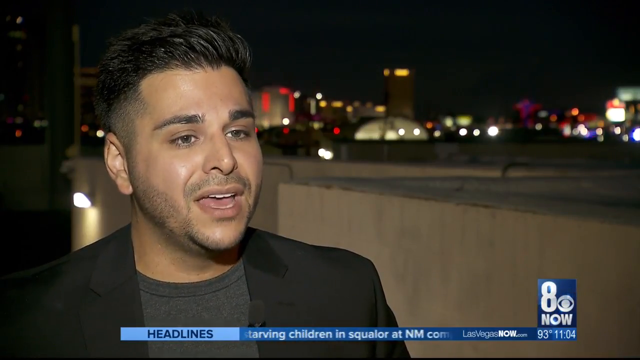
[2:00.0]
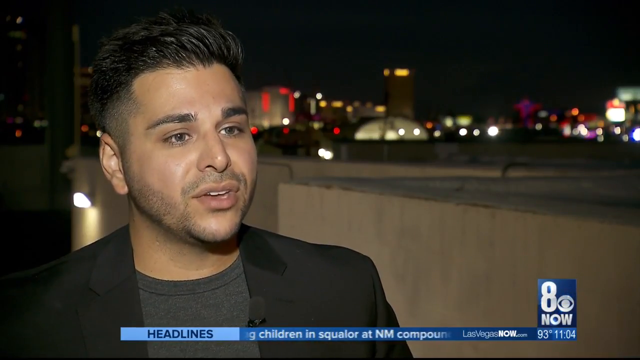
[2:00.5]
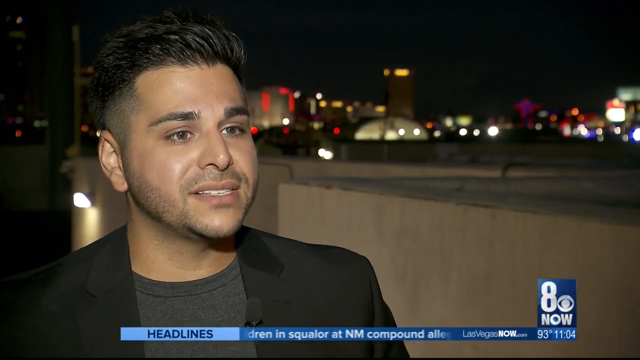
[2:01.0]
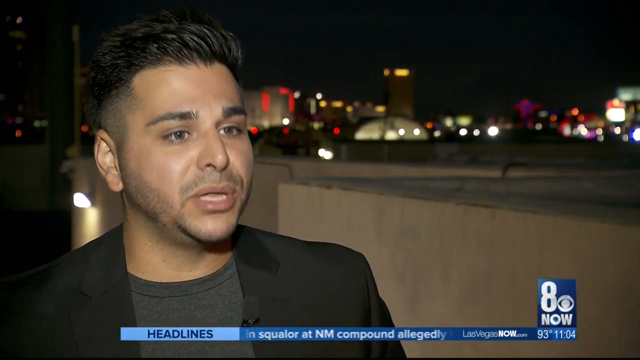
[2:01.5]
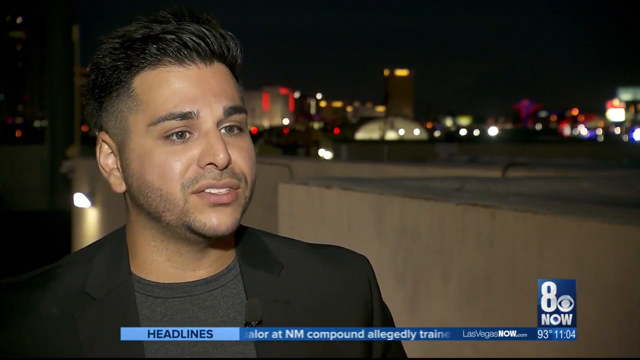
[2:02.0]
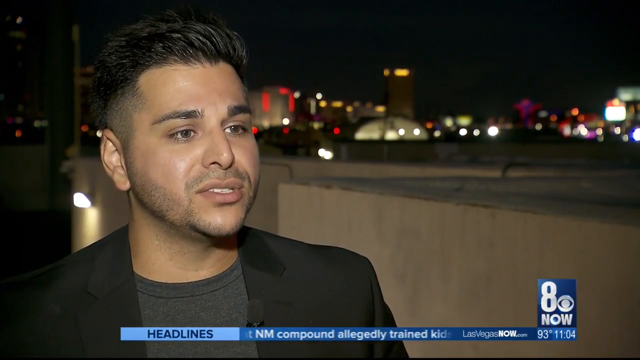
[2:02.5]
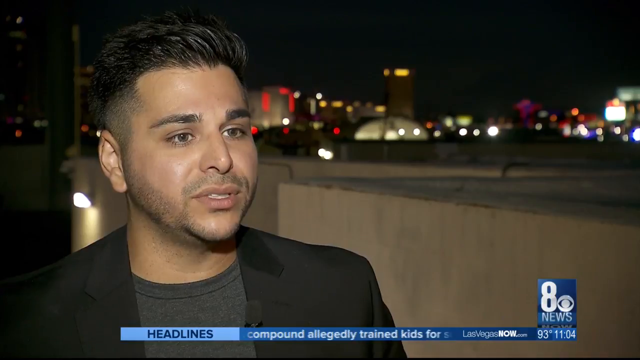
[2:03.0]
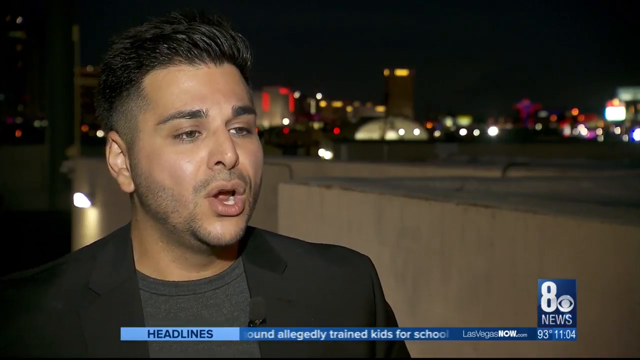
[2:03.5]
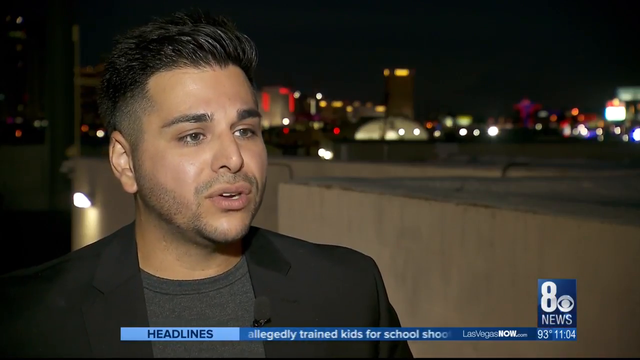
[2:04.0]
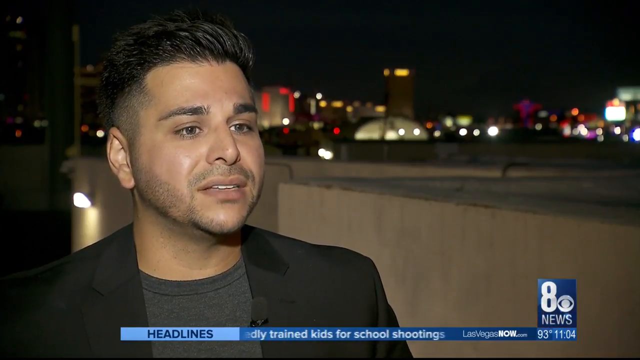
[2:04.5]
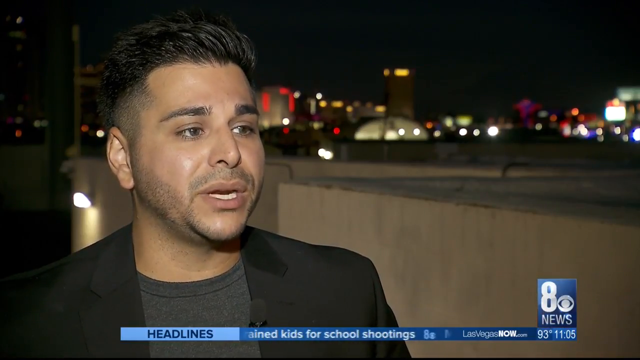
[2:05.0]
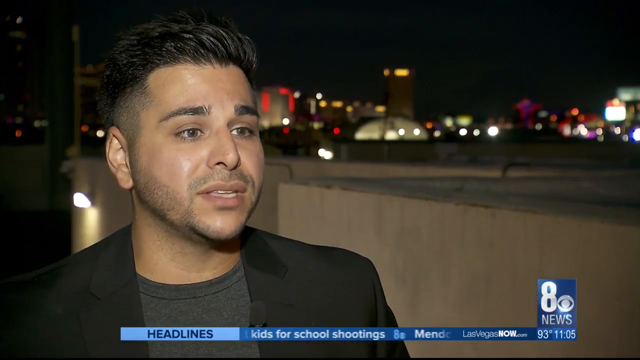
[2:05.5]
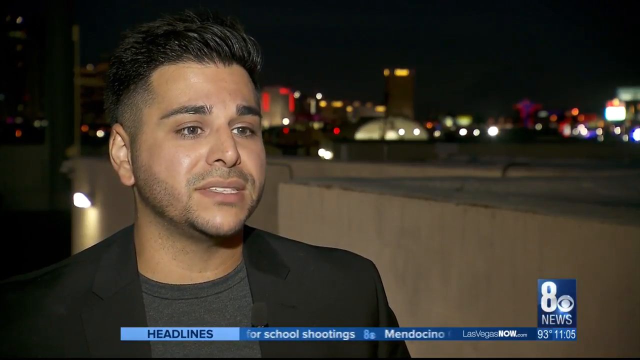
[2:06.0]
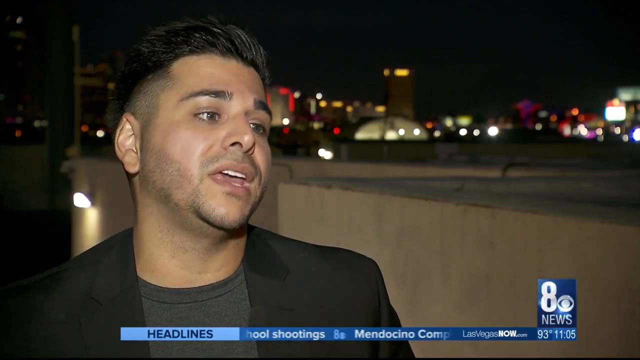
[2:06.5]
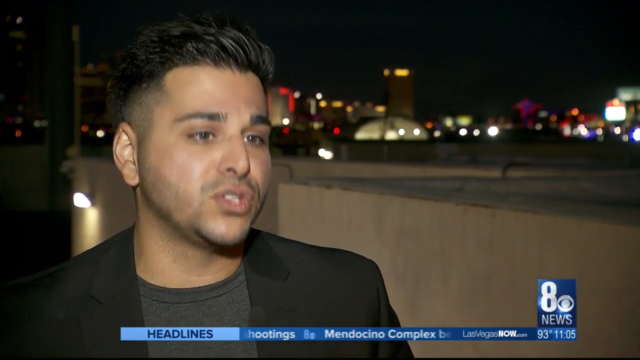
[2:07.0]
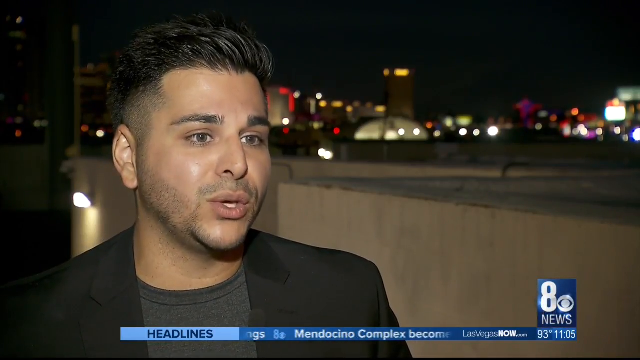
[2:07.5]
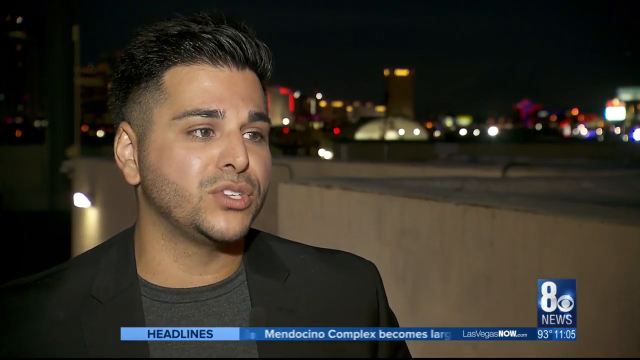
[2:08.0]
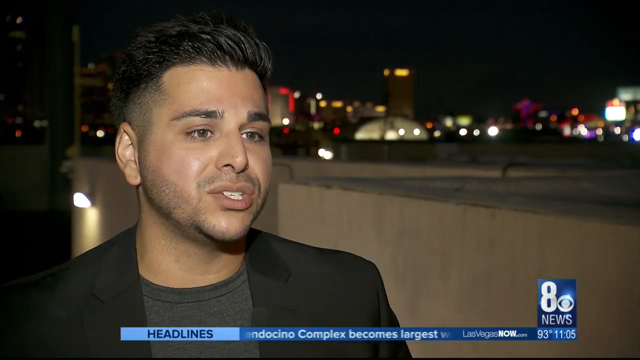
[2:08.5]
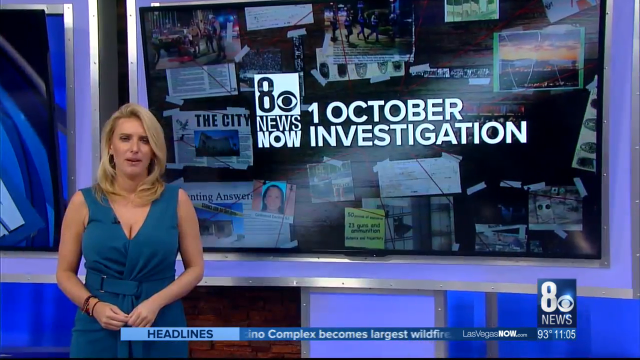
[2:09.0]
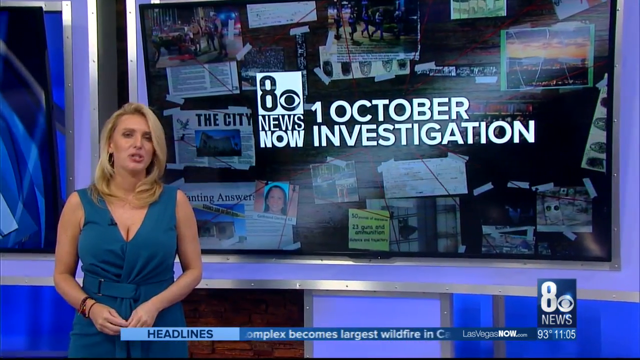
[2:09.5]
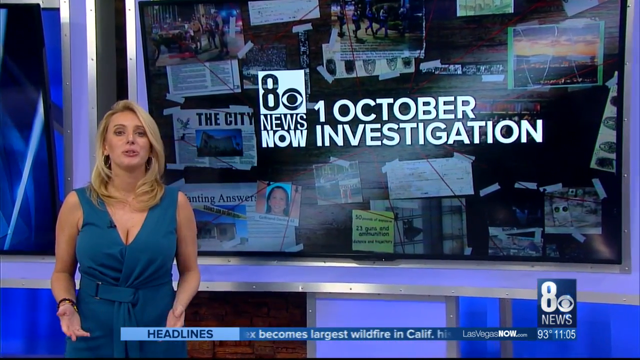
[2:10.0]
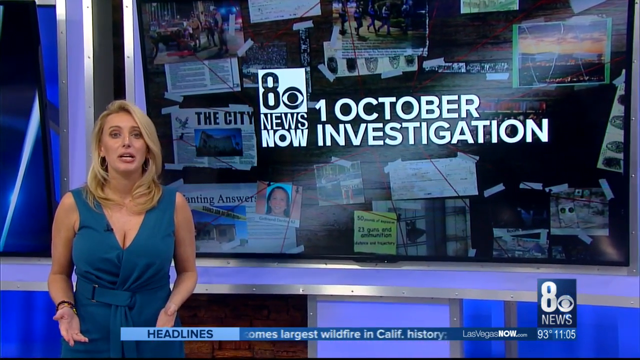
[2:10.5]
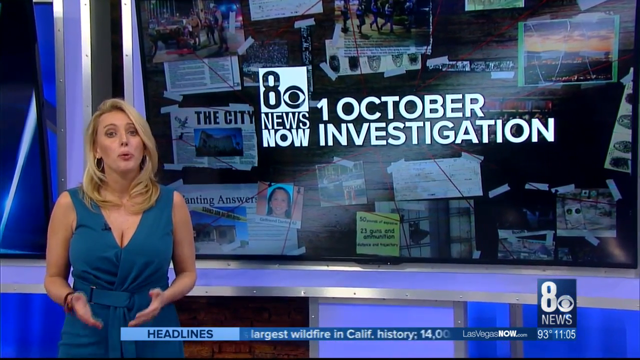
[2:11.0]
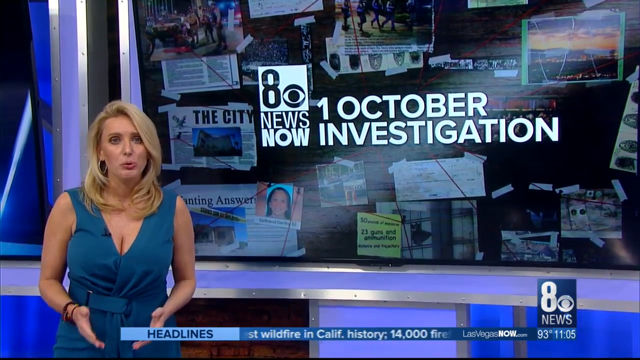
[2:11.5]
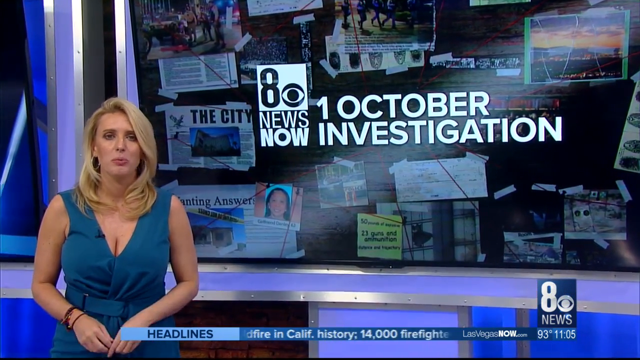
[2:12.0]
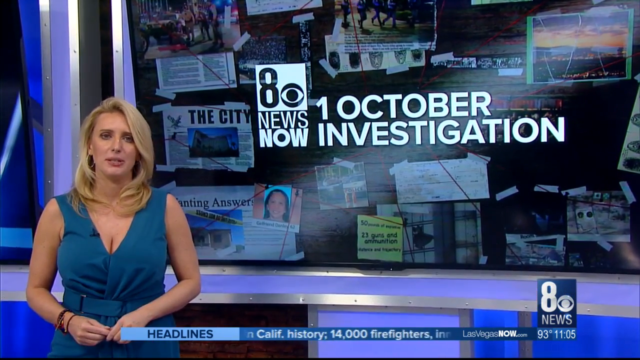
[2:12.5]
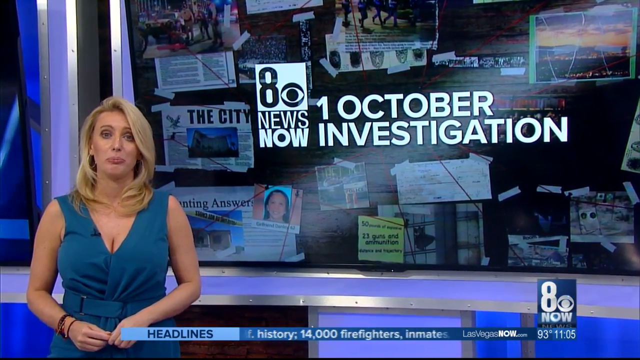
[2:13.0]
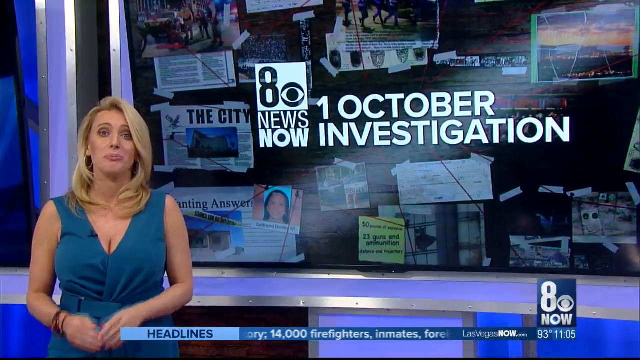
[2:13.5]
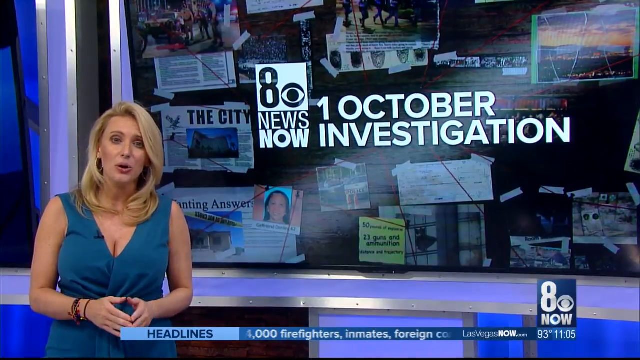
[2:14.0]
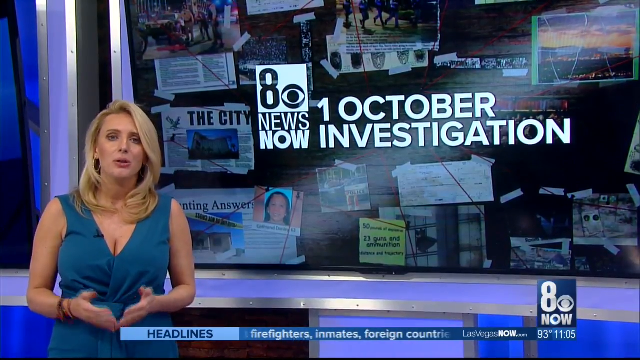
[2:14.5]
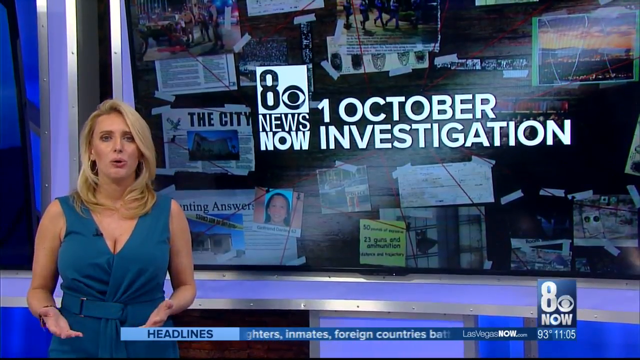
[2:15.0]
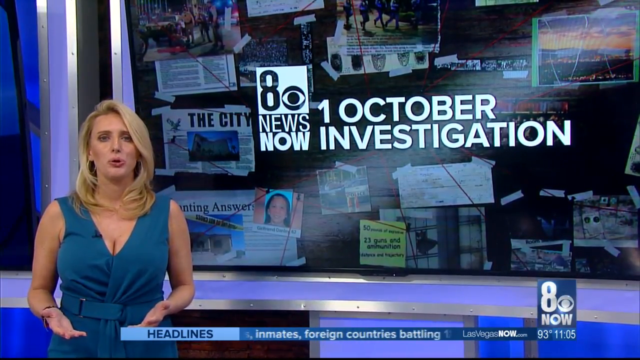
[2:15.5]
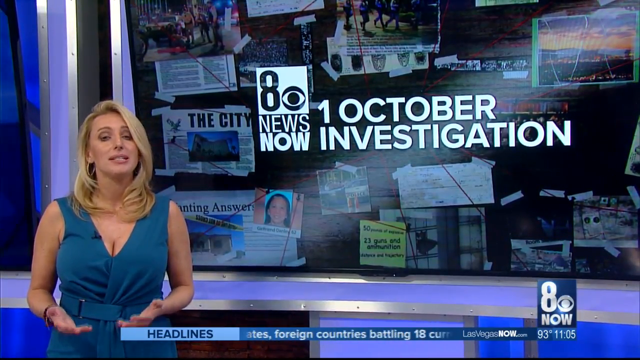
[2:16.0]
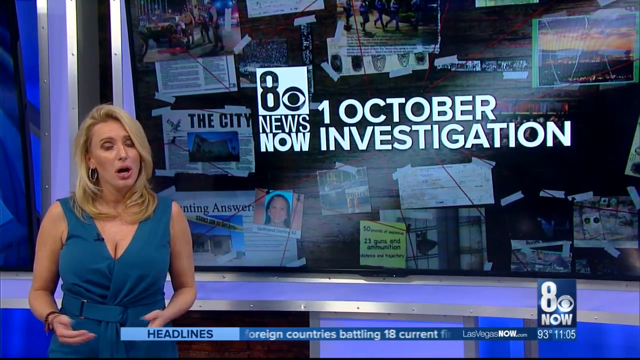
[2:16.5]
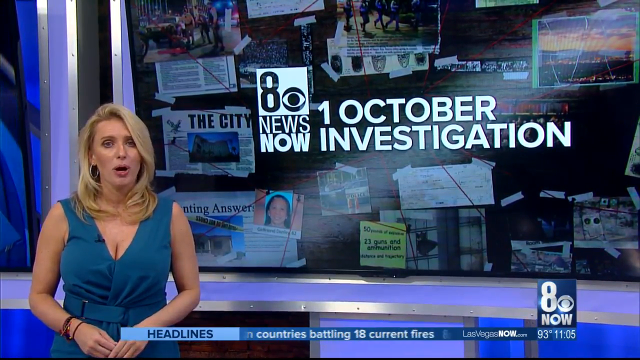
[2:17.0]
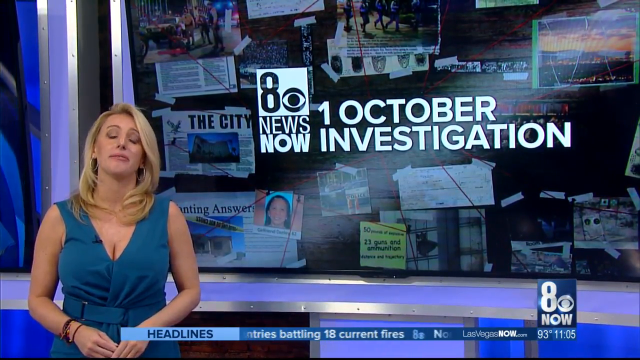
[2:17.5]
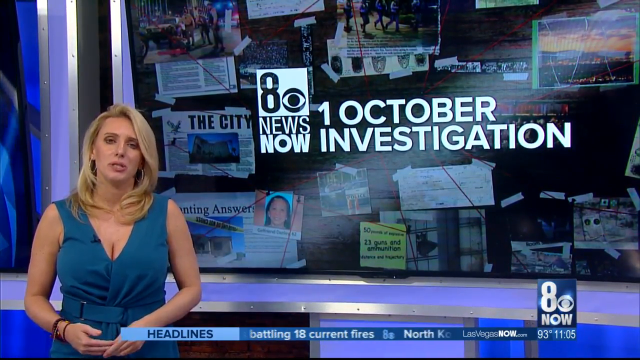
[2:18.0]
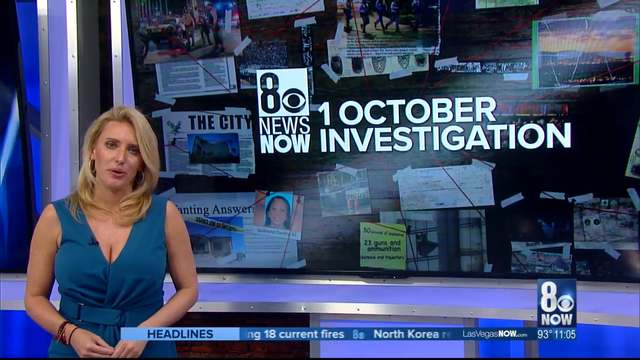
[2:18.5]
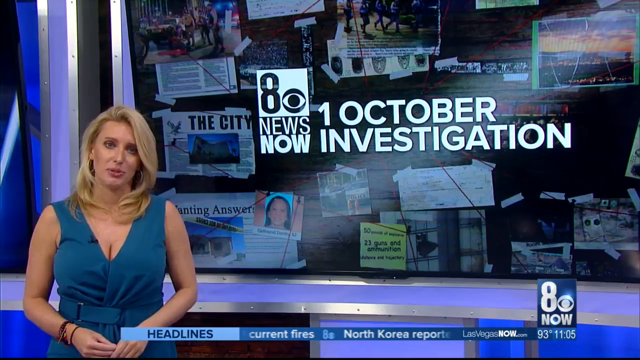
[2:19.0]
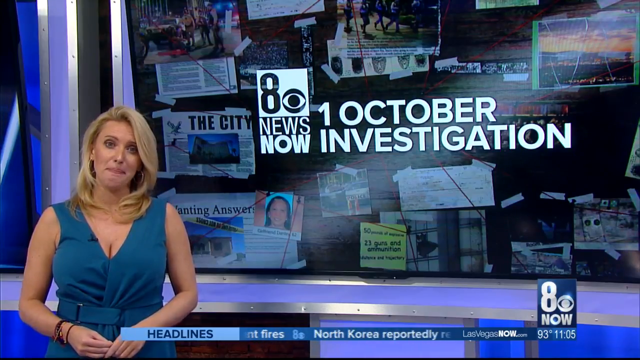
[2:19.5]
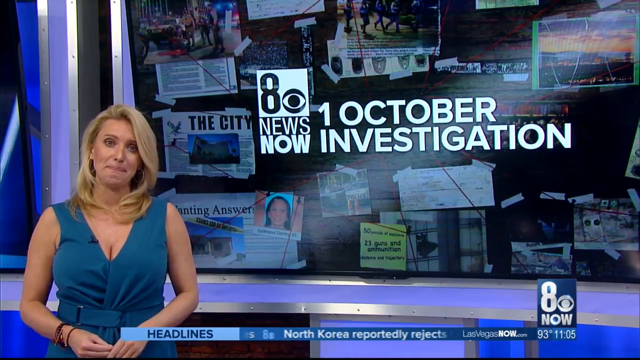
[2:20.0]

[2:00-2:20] Zah looks directly at the female reporter, who is off camera, standing next to the camera, and he keeps speaking with her. His background is a town at night, dark behind him. The video returns to the news reporter in the newsroom, who is leading the news. The heading reads "1 October investigation" on the channel 8 News Now. While she talks, different headlines flash across the bottom of the screen, including "Mendokina Complex becomes largest wildfire in California history", "14,000 firefighters, inmates, foreign countries battling 18 current fires" and "North Korea reportedly rejects", where the video ends.